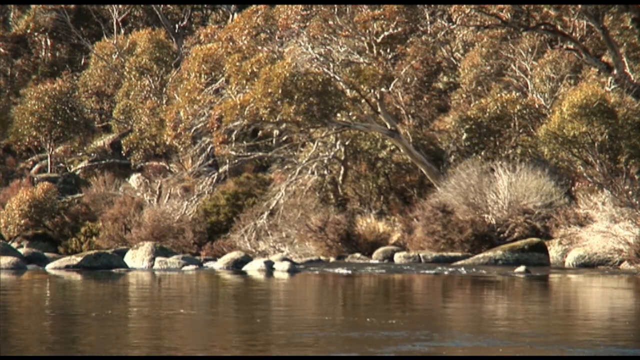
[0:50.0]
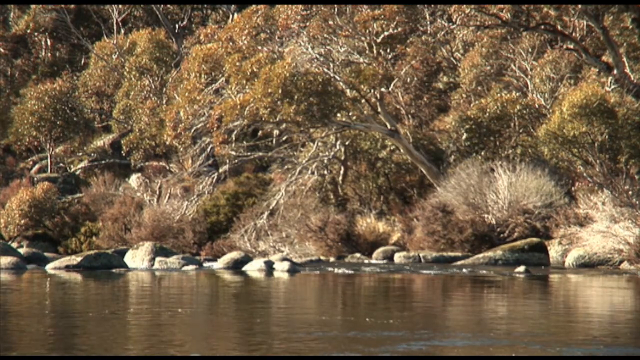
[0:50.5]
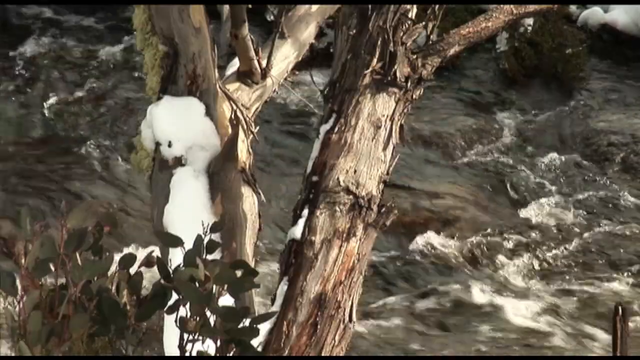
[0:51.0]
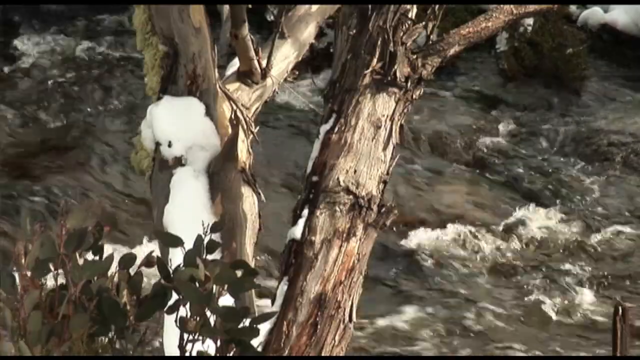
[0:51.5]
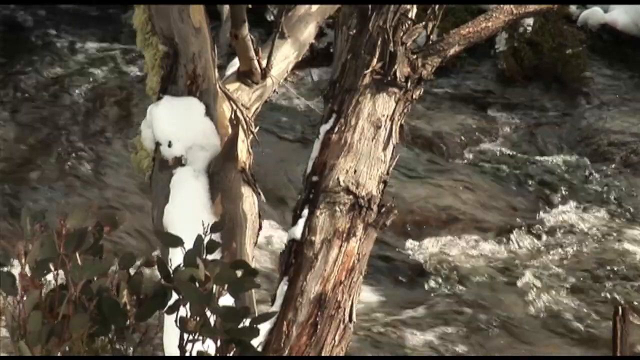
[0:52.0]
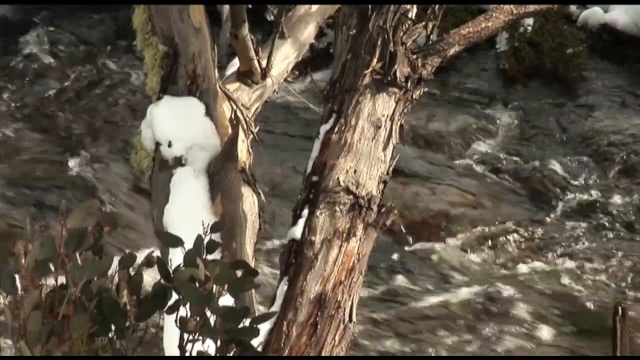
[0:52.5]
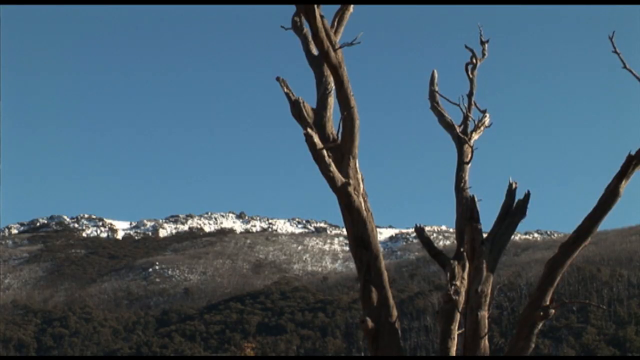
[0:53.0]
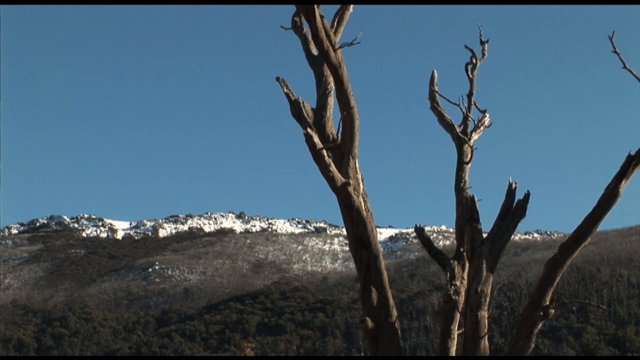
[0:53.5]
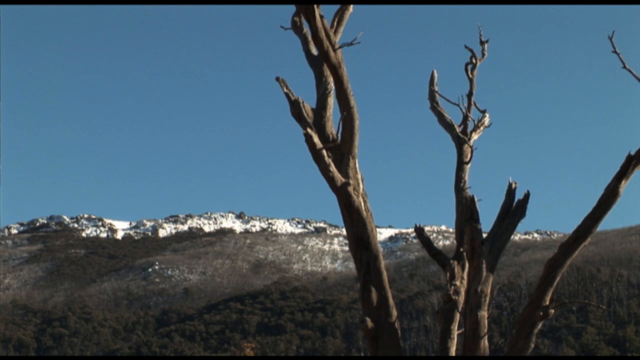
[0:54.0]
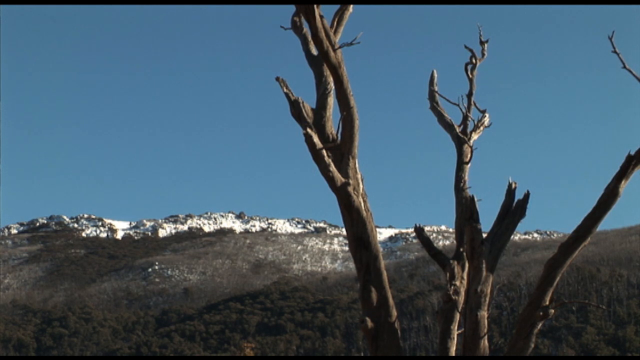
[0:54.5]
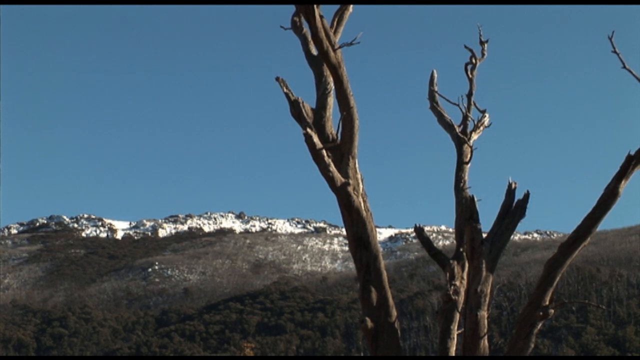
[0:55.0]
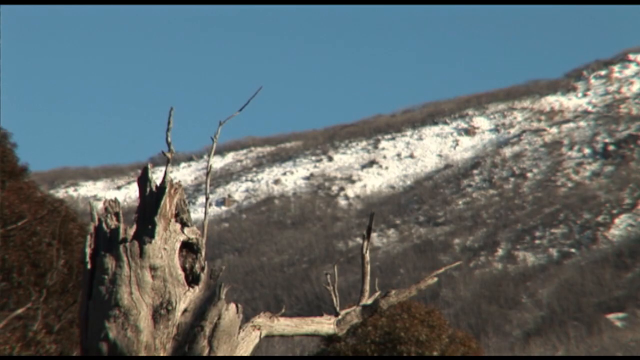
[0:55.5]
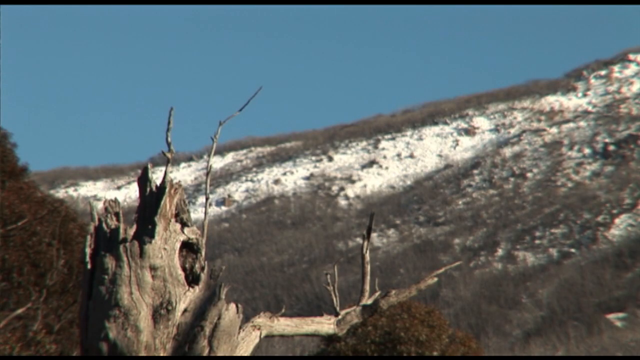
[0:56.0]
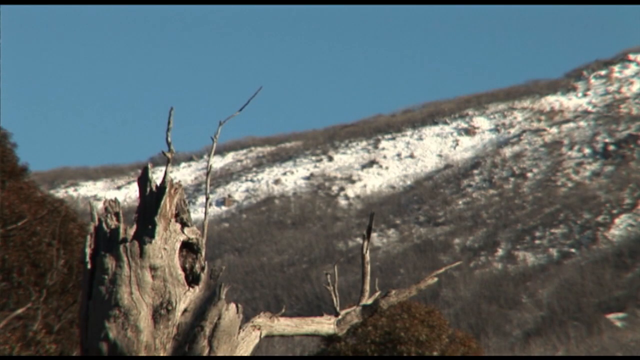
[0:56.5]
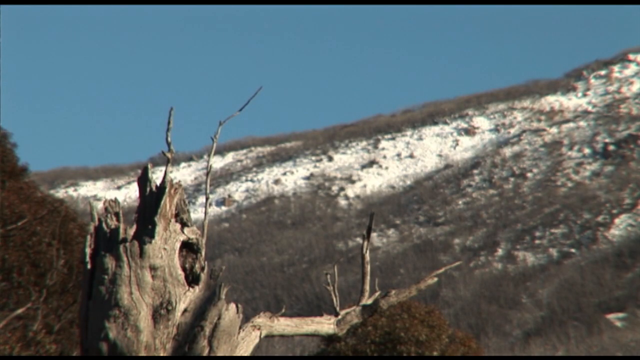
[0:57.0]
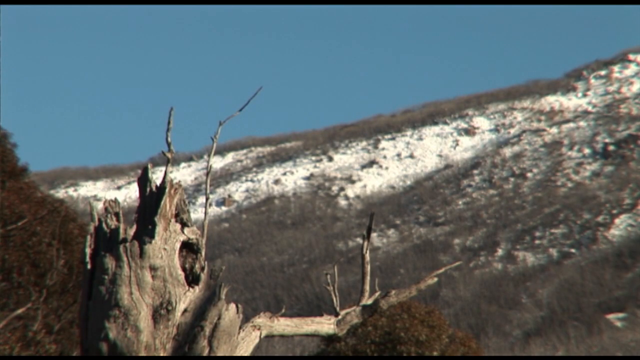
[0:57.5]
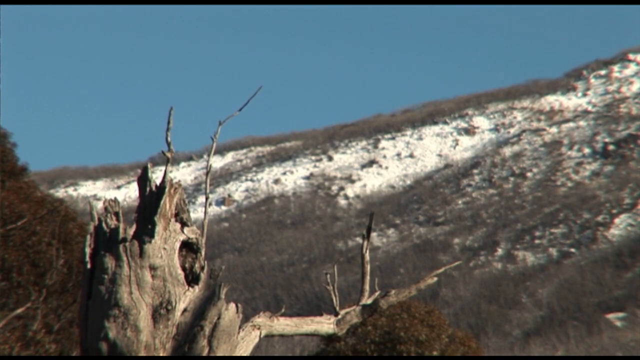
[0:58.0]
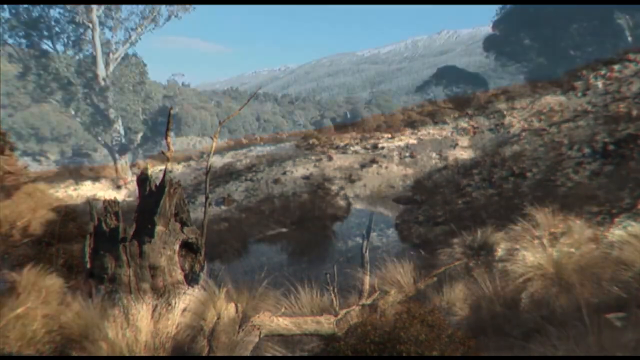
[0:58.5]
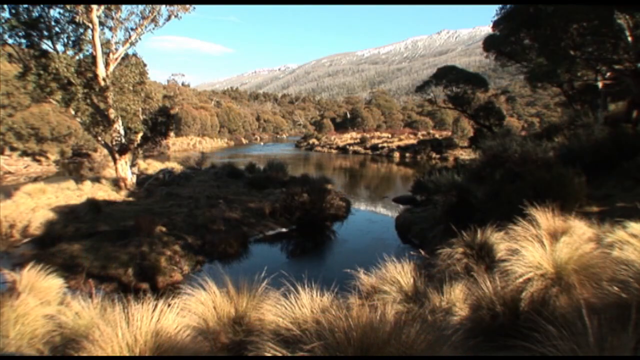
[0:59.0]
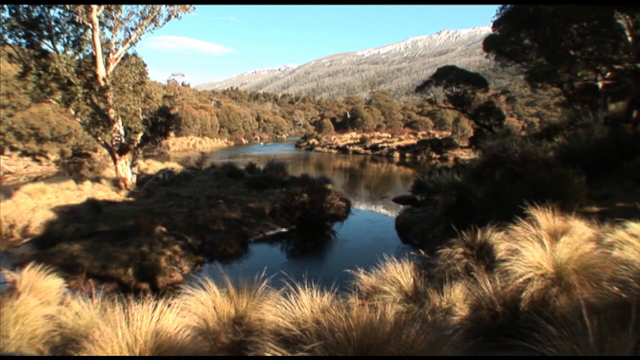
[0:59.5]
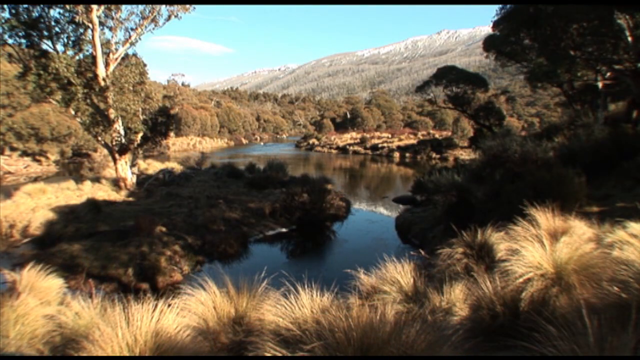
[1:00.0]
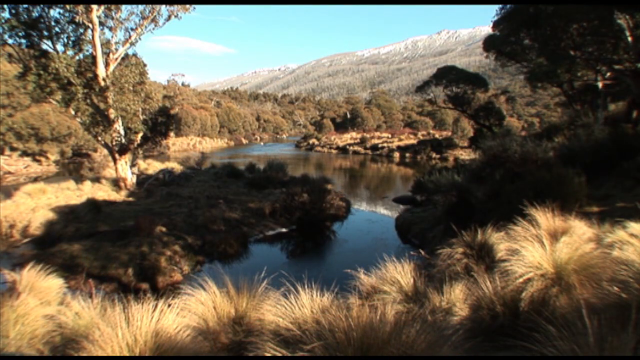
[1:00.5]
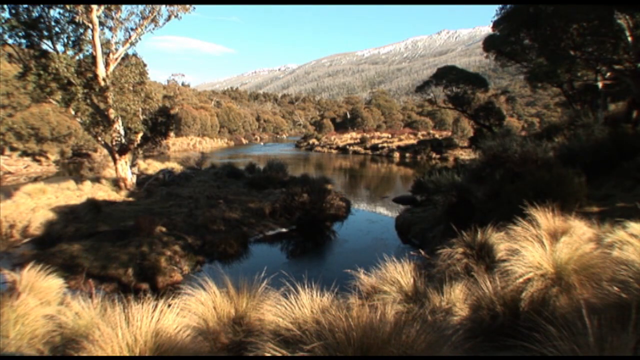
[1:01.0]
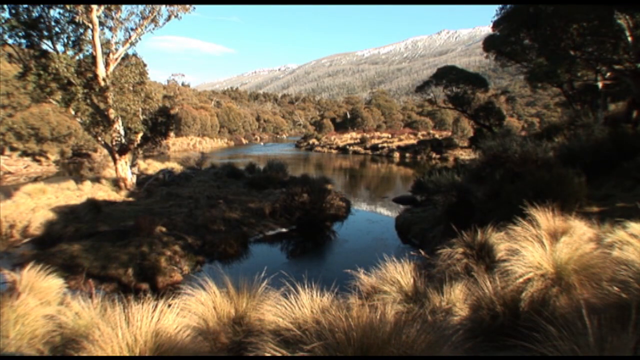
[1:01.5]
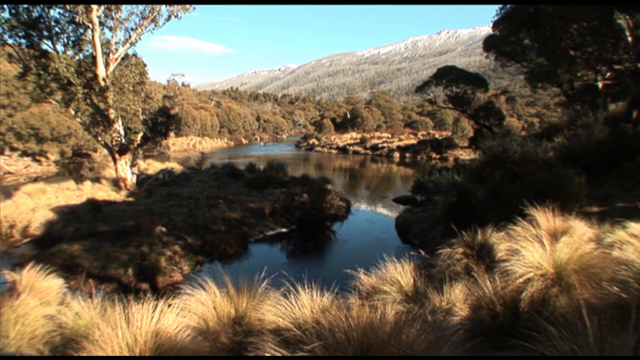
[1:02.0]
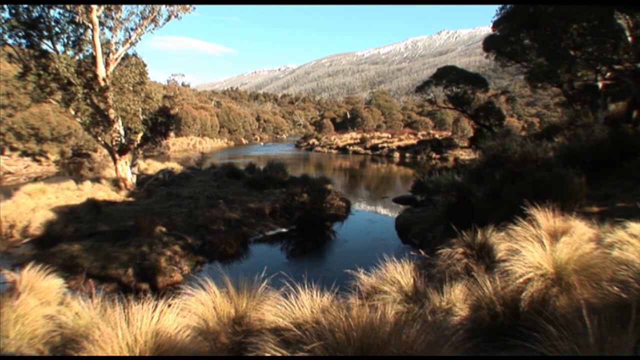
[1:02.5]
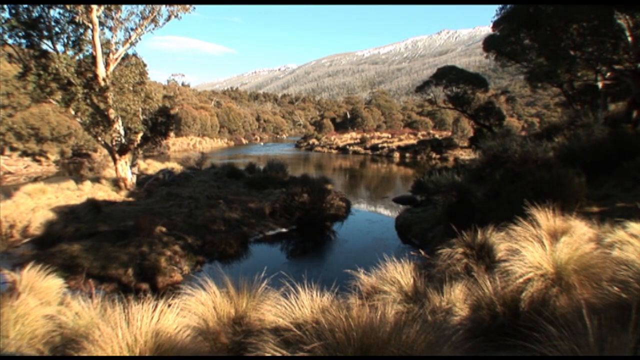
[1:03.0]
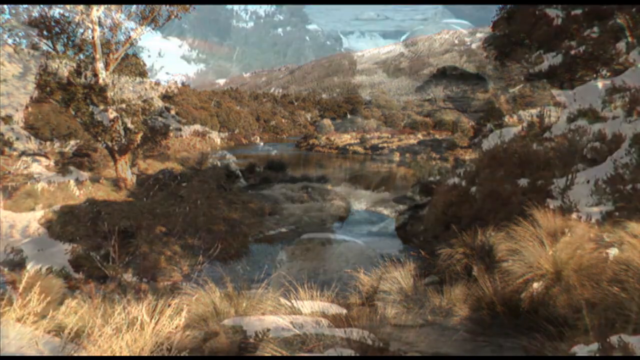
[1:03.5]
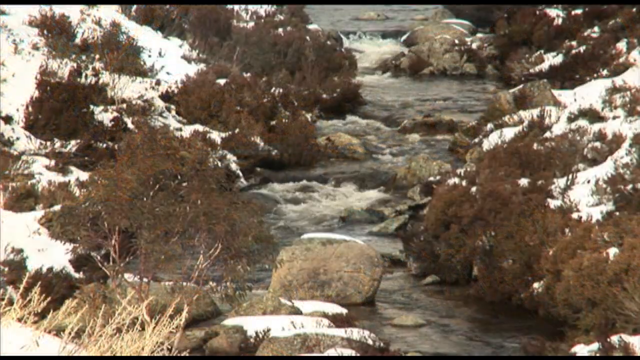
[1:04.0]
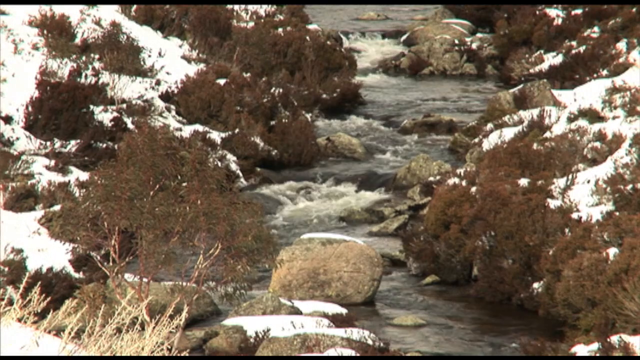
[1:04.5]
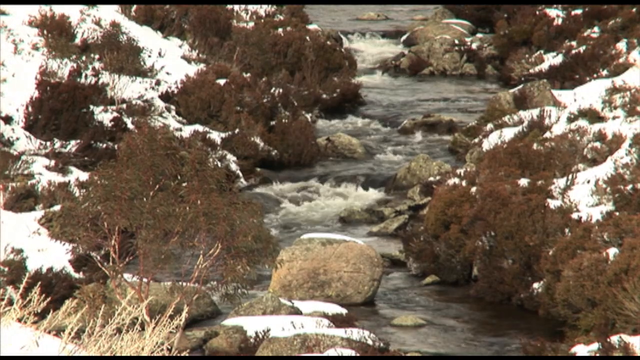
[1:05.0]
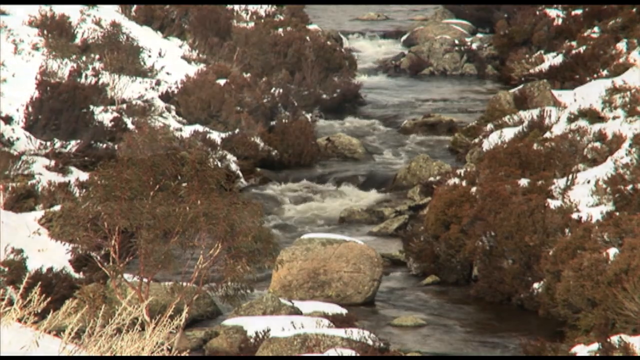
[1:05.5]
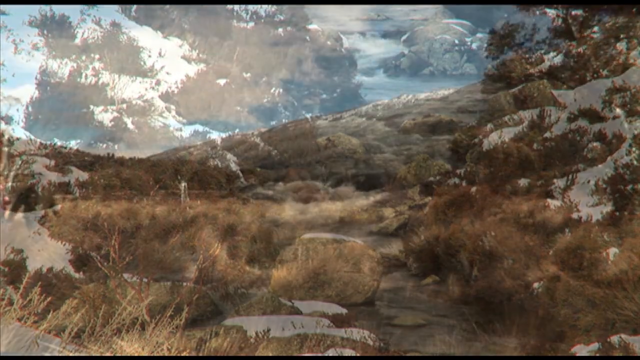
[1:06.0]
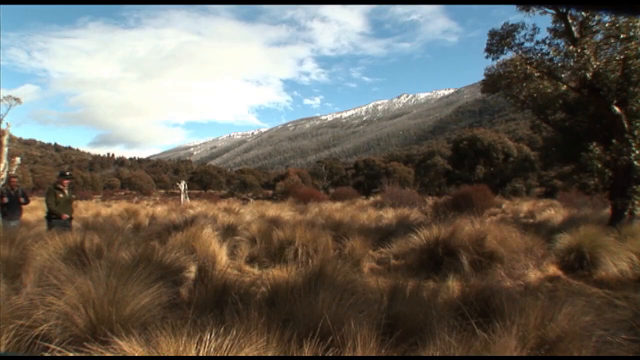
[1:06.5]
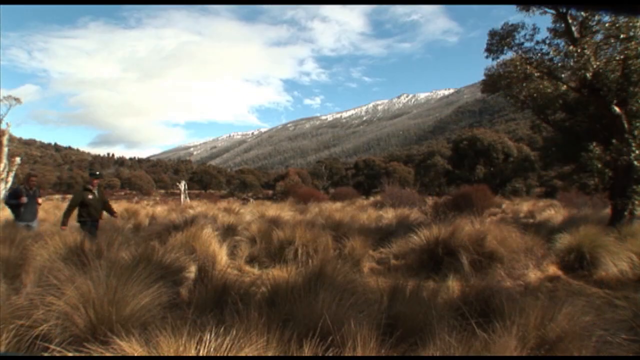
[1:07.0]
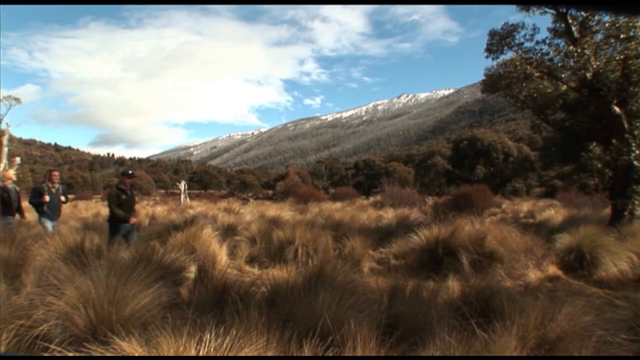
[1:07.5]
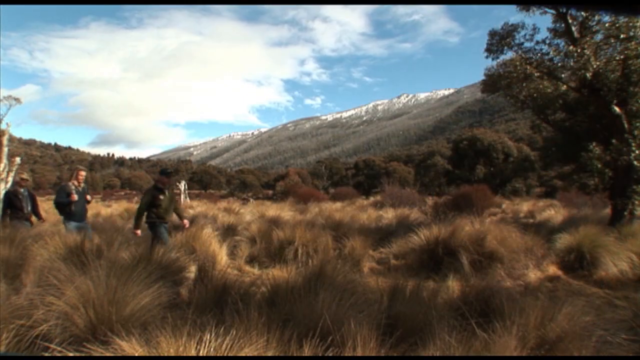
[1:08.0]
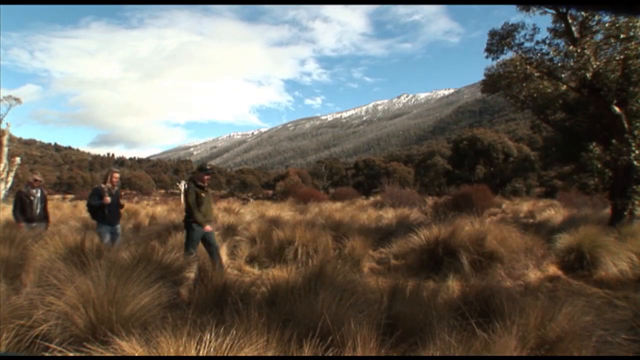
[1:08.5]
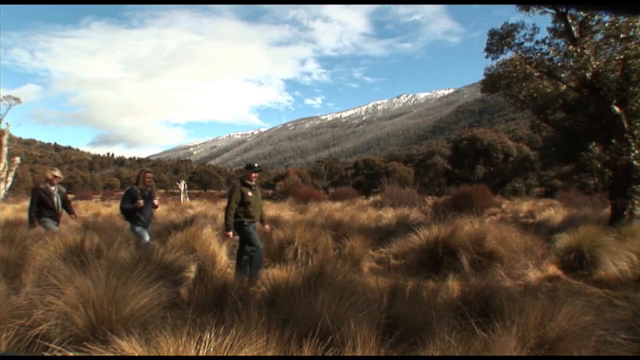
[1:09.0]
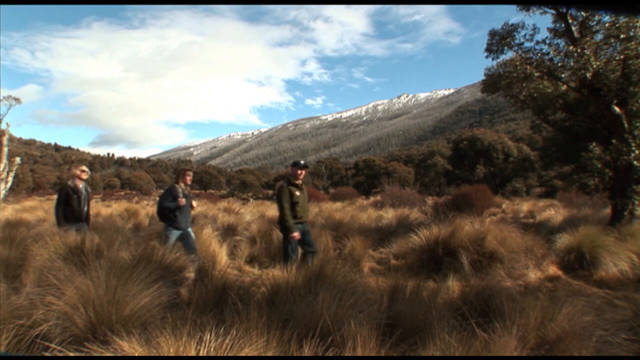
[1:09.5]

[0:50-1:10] A calm stream is at the front of the screen, with bouldery rocks behind it and dry scrubland and leafless trees behind those. A river then runs quite quickly over rocks, some of the water frothing white, with trees in the foreground that have clumps of snow attached. Snowy mountains appear in the distance under a clear blue sky, with three trees sticking out at angles from each other. From the right-hand side comes another similar scene, this time with just one tree at the bottom left. A river in a kind of S shape follows, with foresty scrubland on either side and a snow-topped mountain at the very back. The shot cuts to a river cutting between rocks and boulders. The three hikers come from the left-hand side of the screen and walk towards the right; the person with the rucksack is in the centre this time and the person with blonde hair and the hoodie is at the rear. The stream appears with some leaves in focus at the front and the rest out of focus, and then the stream runs with the hikers walking right next to it.